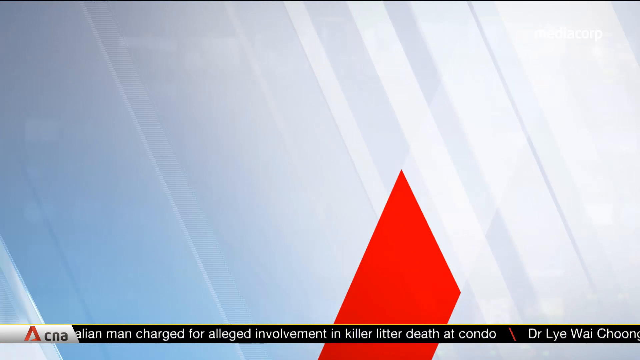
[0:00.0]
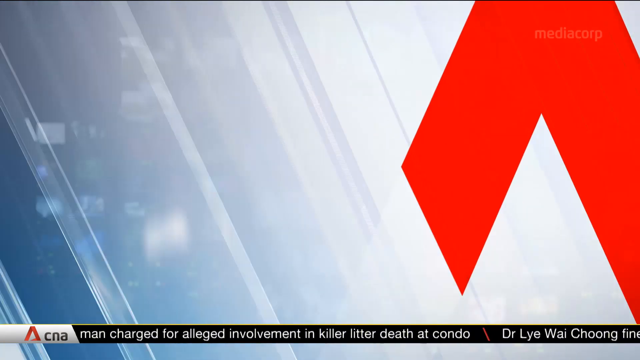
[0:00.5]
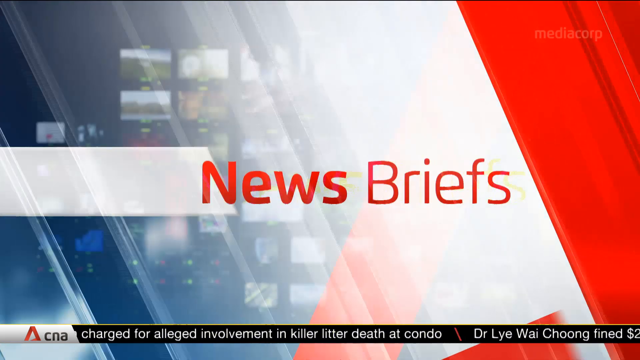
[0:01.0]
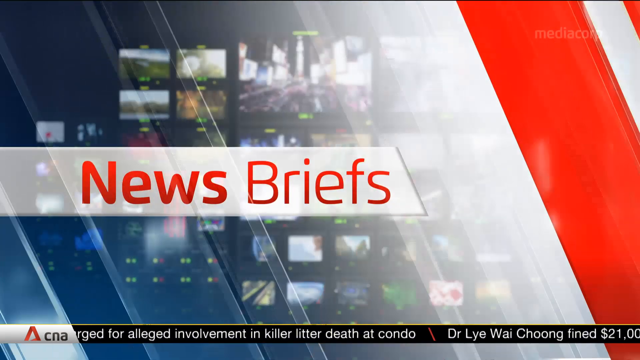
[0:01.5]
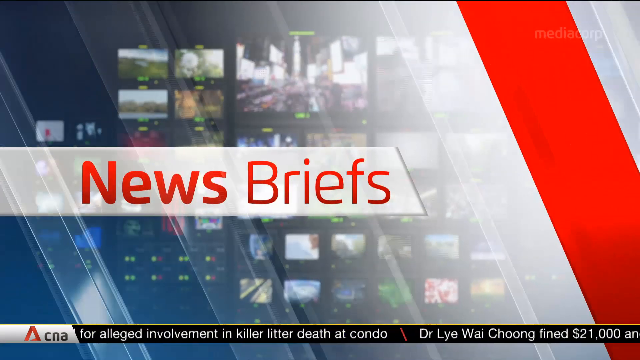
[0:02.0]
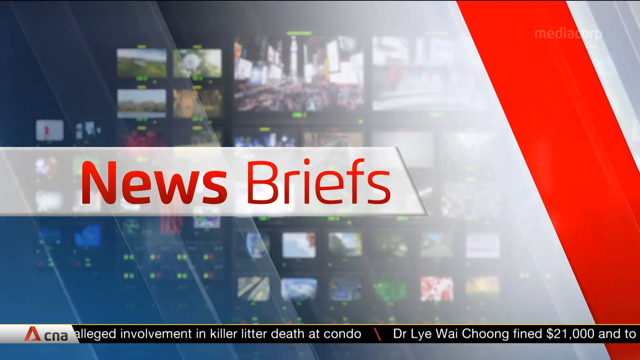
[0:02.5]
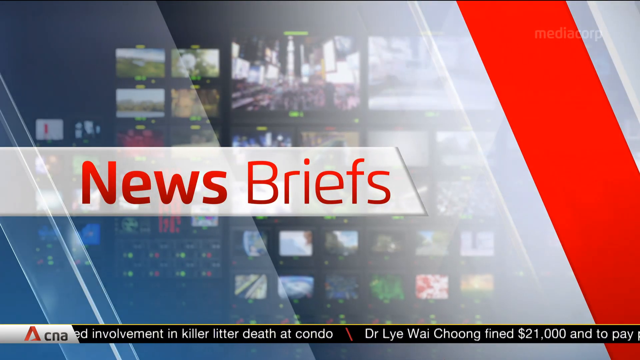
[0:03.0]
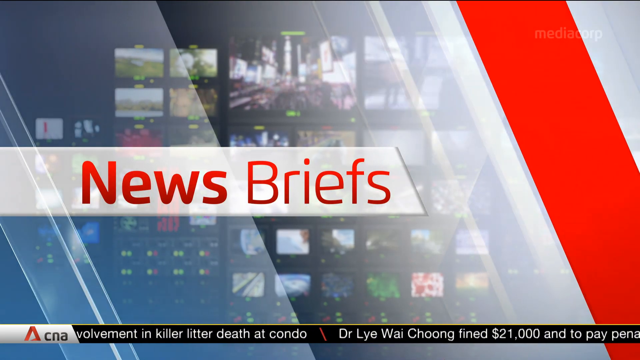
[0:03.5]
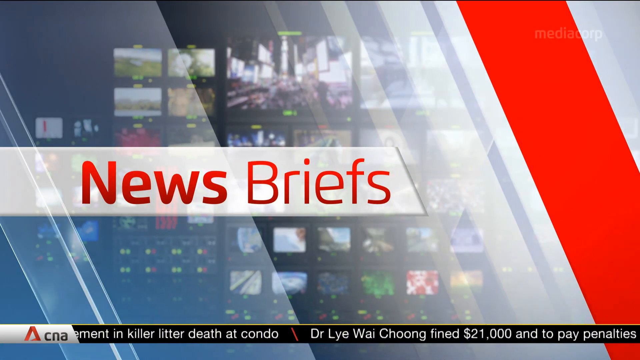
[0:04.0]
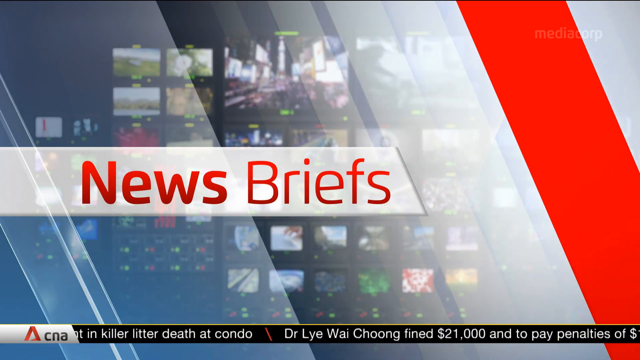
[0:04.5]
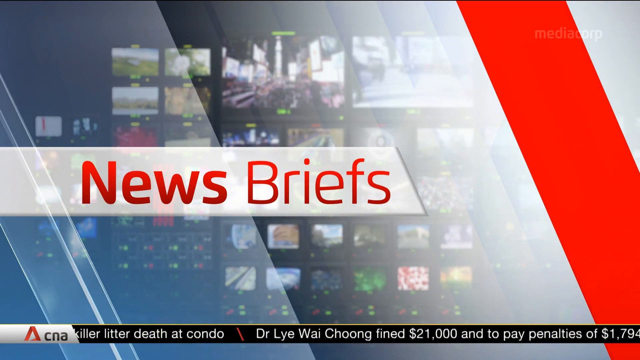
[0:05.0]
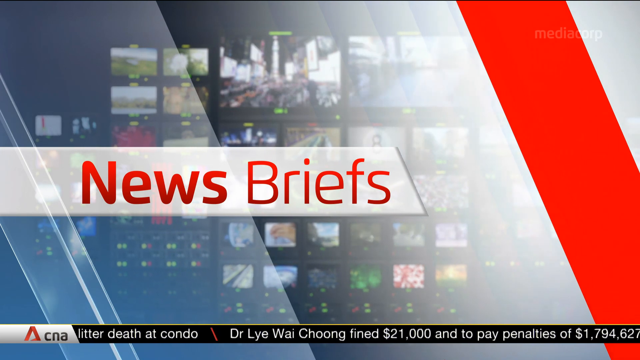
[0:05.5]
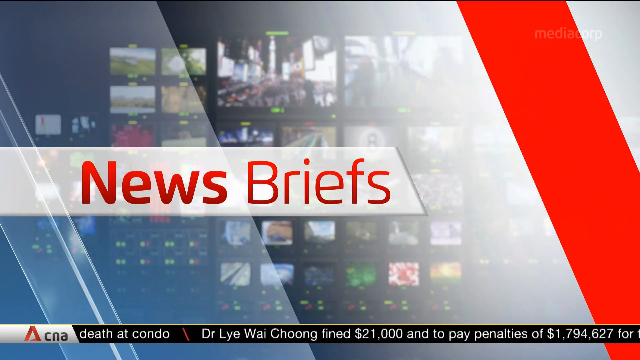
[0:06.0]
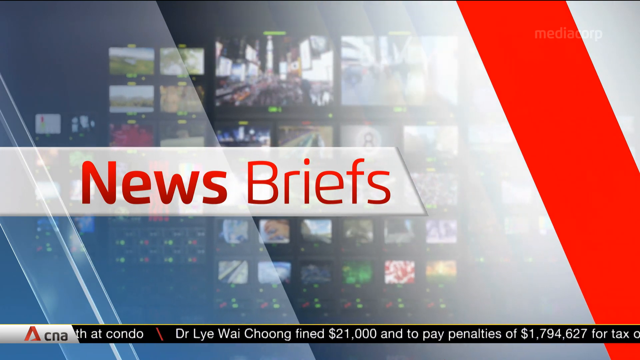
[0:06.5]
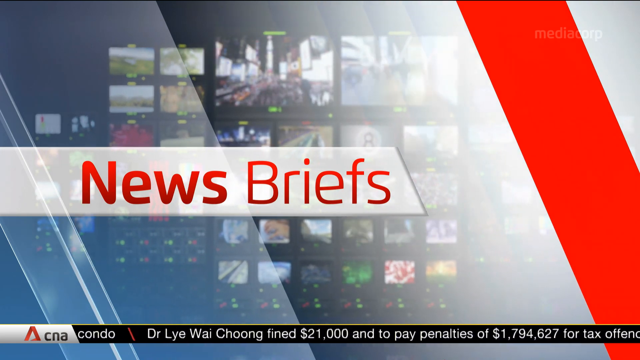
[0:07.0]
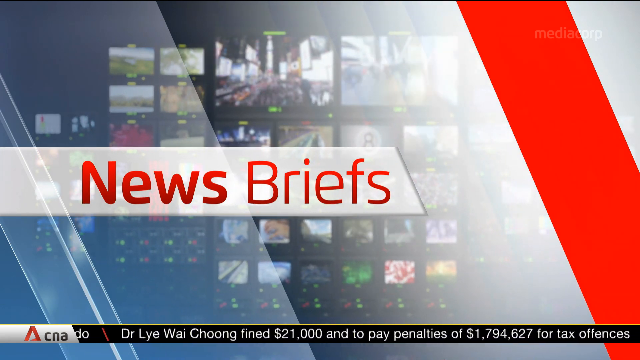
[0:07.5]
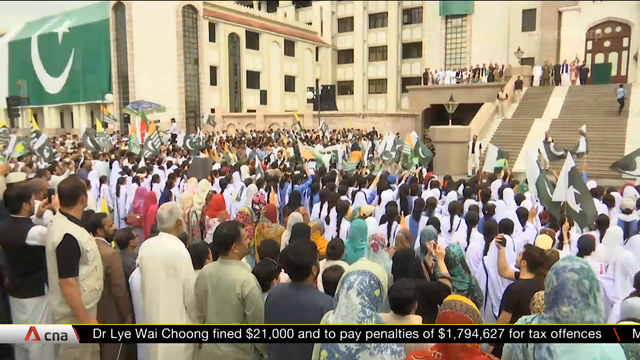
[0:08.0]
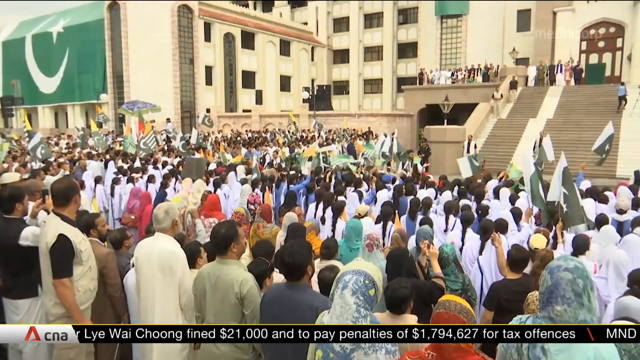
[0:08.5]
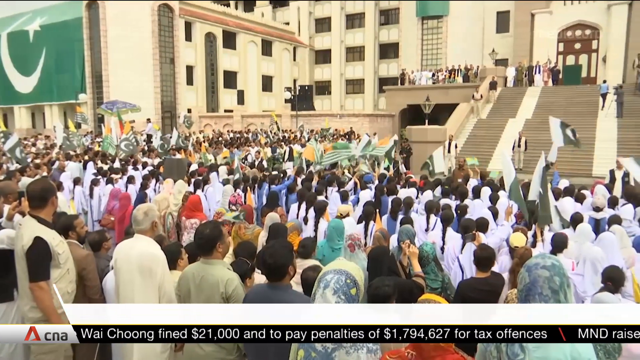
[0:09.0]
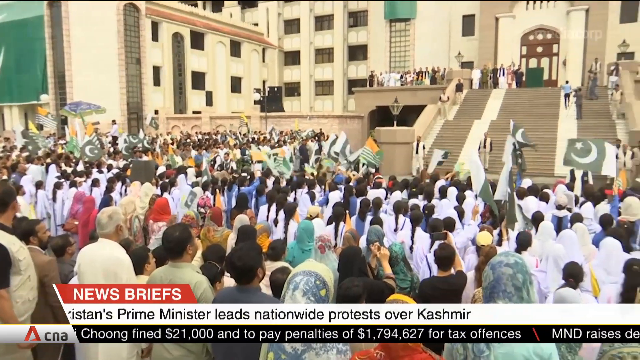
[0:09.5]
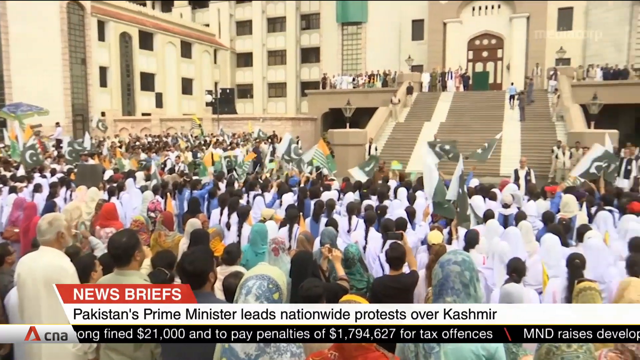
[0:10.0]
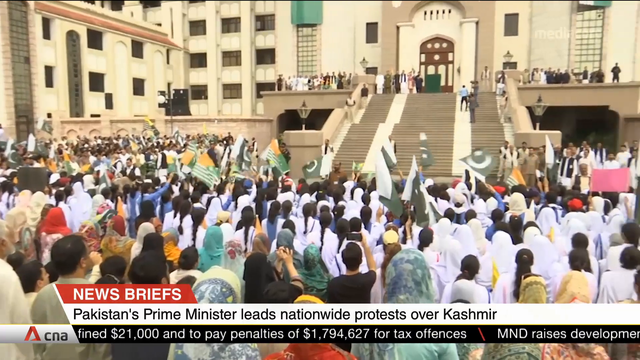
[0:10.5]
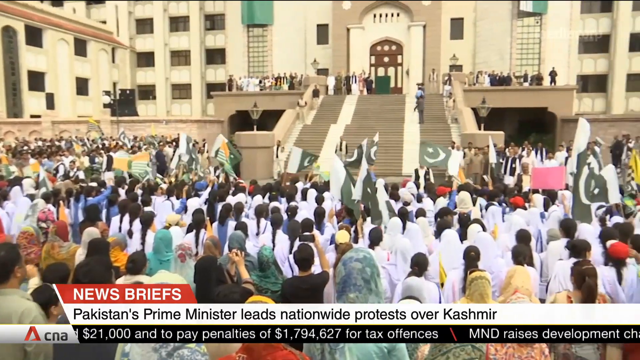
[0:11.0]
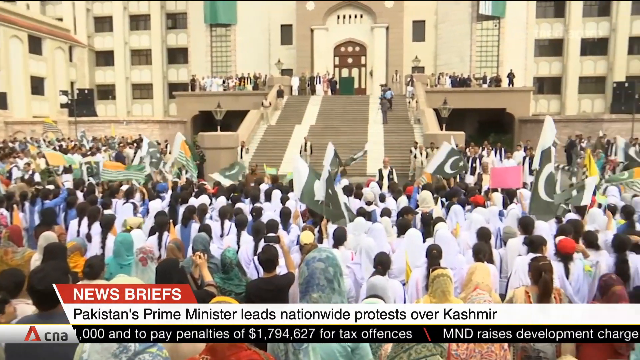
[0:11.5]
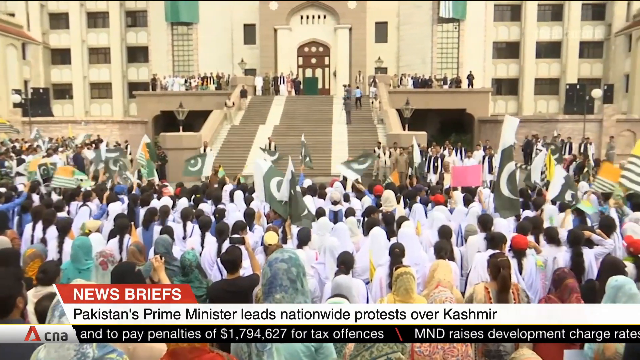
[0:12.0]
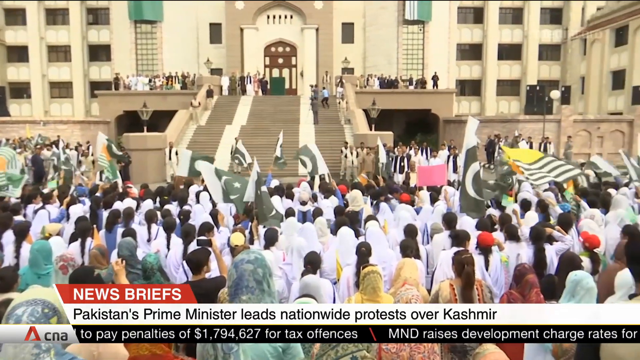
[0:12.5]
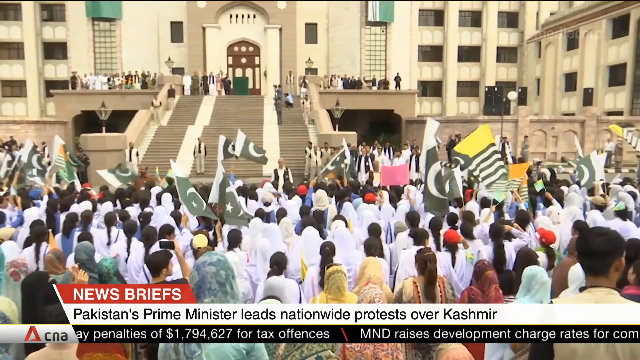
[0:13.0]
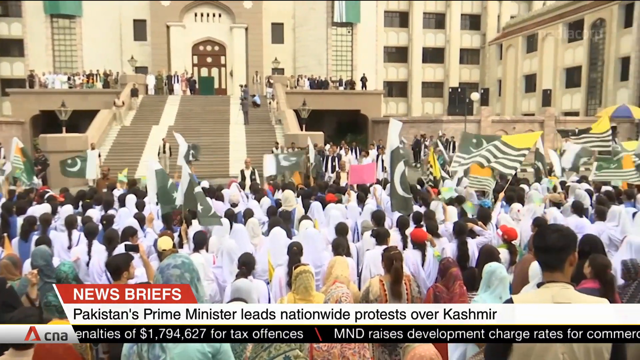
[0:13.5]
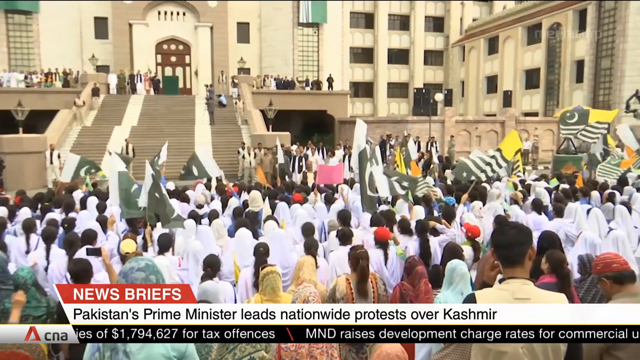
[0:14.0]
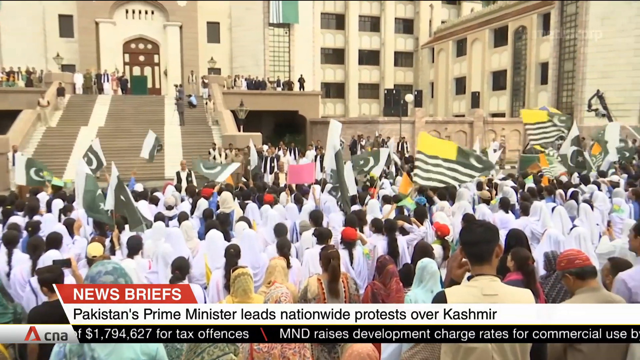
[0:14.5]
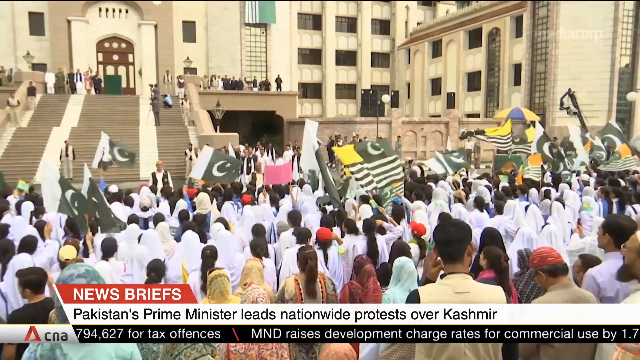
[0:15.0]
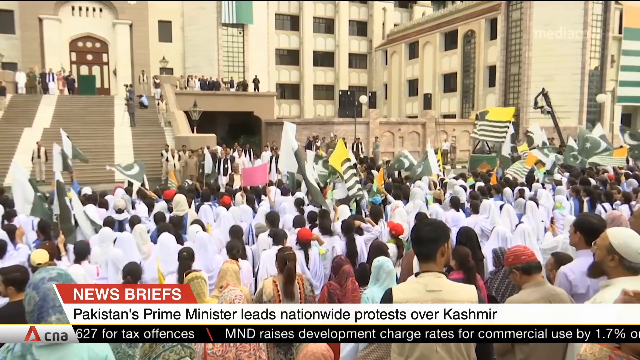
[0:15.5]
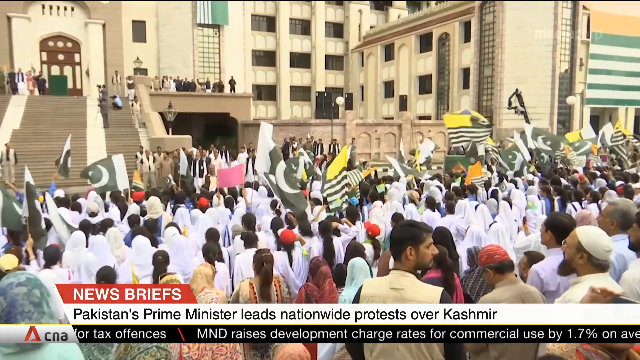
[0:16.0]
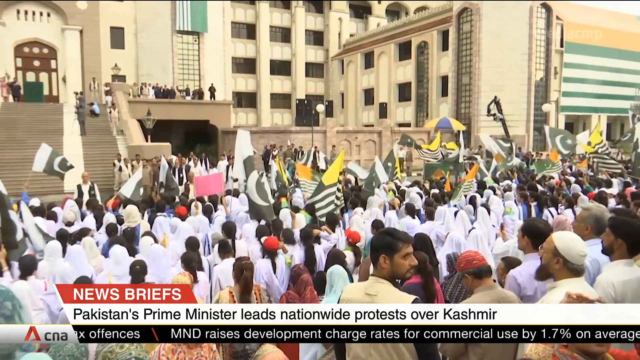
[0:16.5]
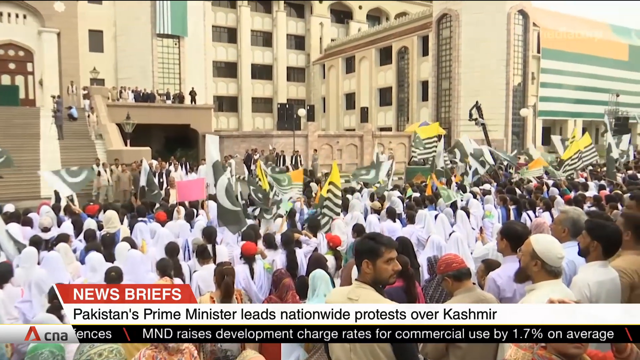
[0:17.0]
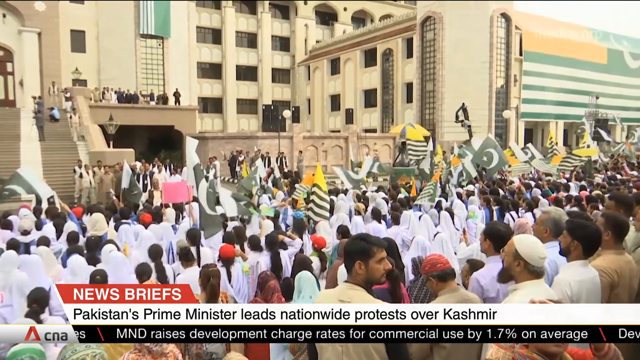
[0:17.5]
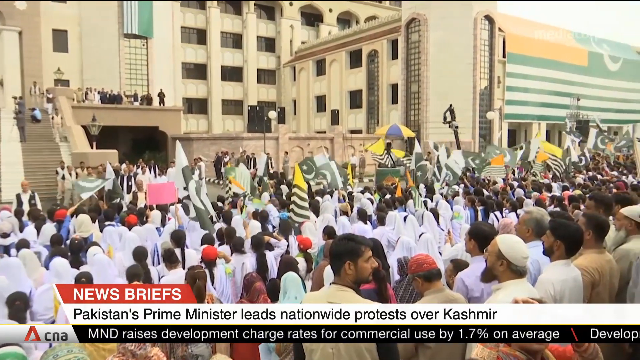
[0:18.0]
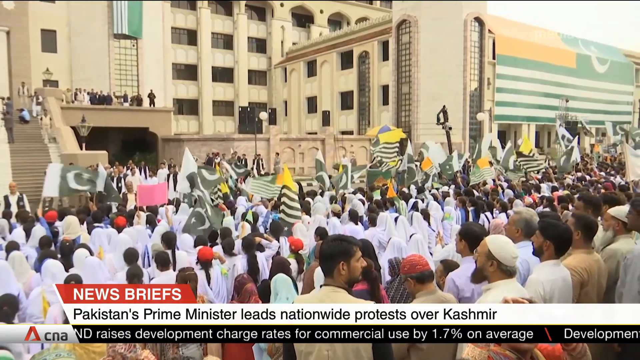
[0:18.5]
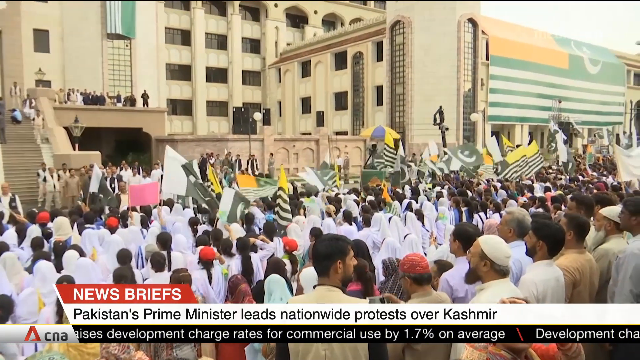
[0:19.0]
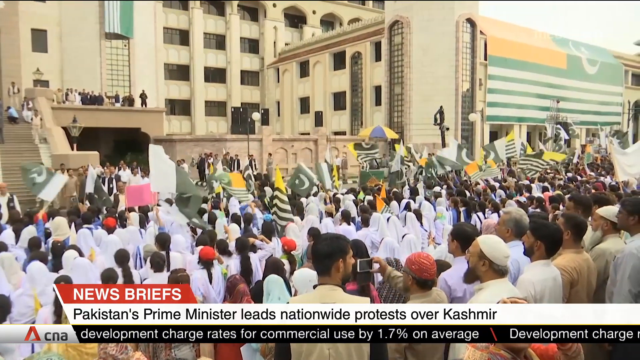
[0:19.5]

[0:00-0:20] The video opens with an intro that says "news briefs," with a number of different screens running in the background and a red line kind of going down at the bottom right. A headline then appears at the bottom reading "News briefs Pakistan's prime minister leads nationwide protests over Kashmir." A crowd of people surrounds the prime minister, and some people wave a flag that has a moon at the top left, blue or black and white stripes below it, and yellow at the top right. Many of the audience members wear white, especially those in the middle, who look like they are part of a group, all wearing cream-colored outfits.